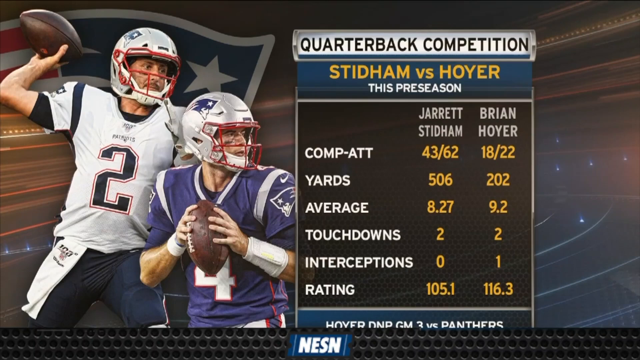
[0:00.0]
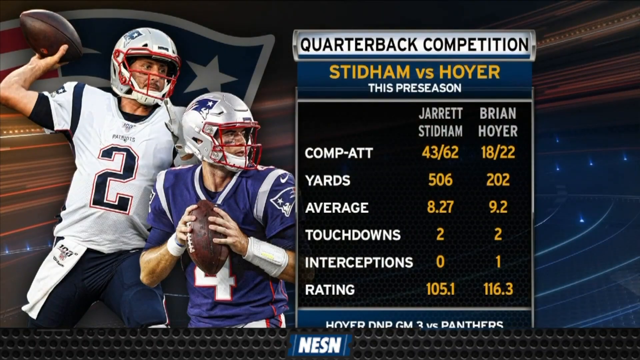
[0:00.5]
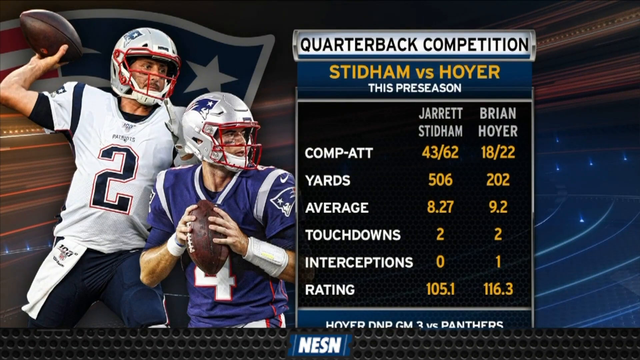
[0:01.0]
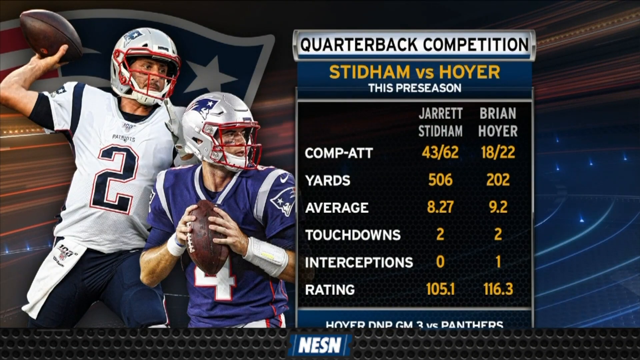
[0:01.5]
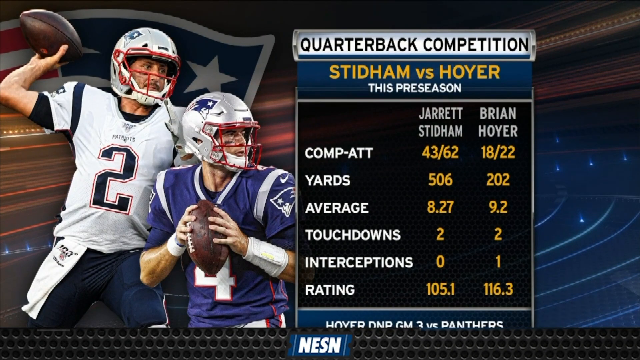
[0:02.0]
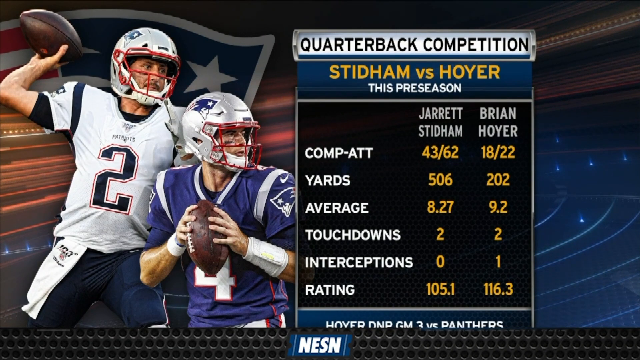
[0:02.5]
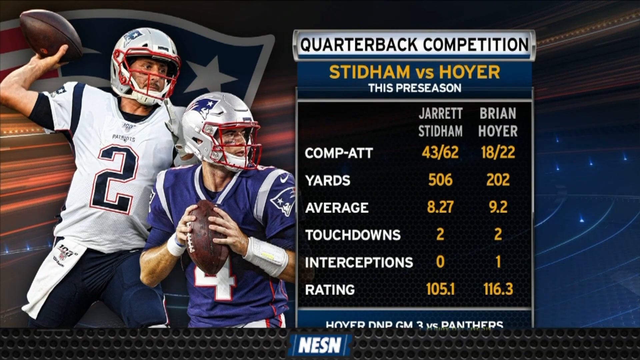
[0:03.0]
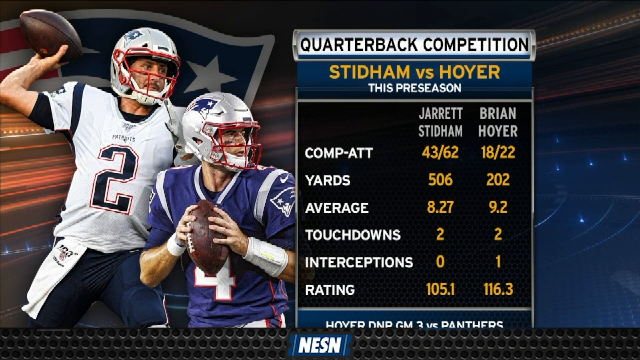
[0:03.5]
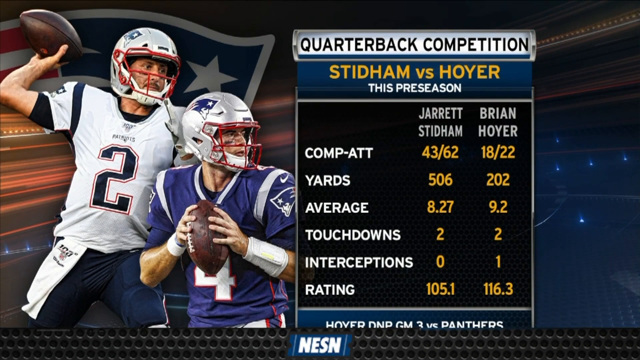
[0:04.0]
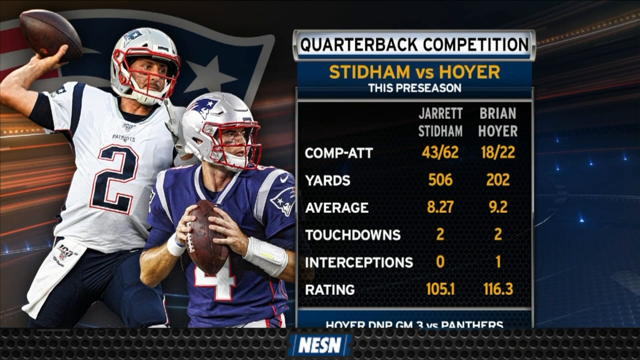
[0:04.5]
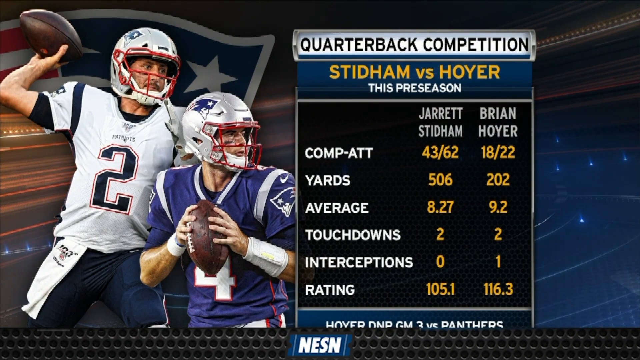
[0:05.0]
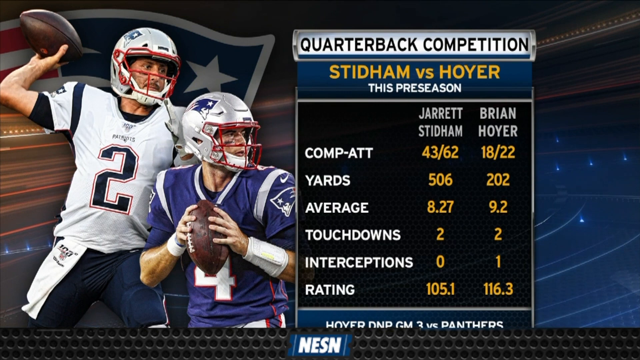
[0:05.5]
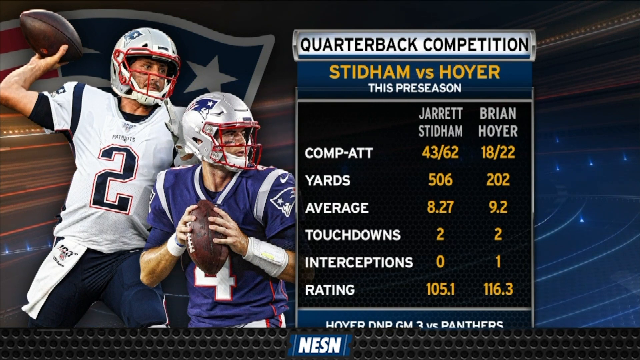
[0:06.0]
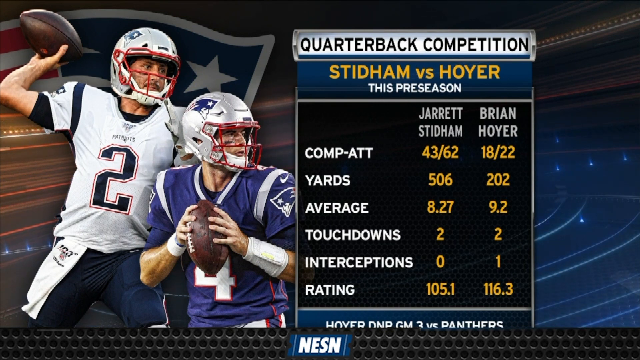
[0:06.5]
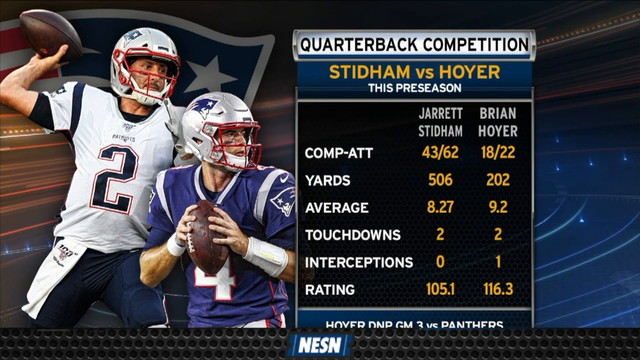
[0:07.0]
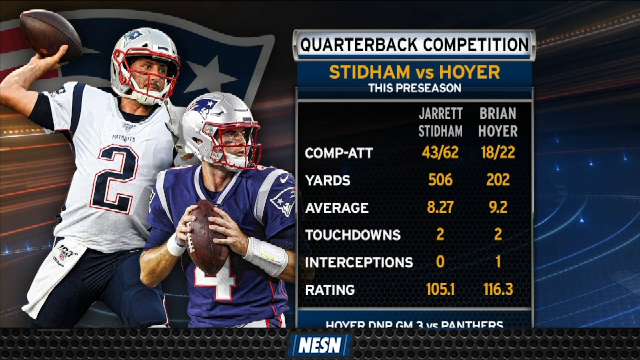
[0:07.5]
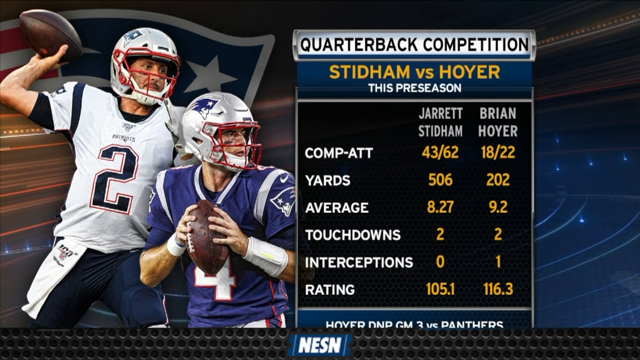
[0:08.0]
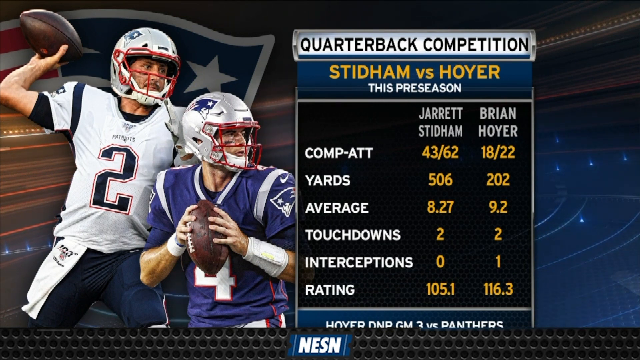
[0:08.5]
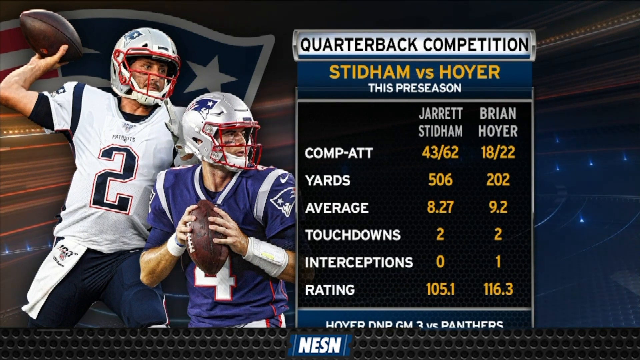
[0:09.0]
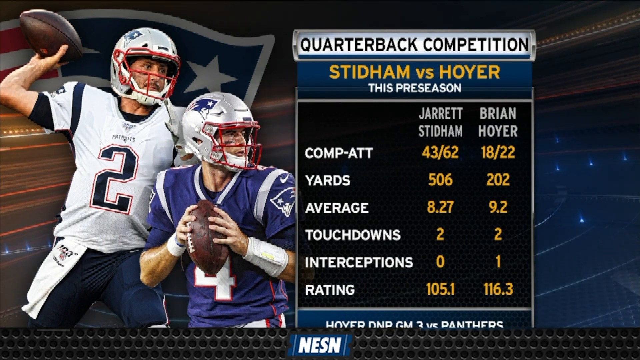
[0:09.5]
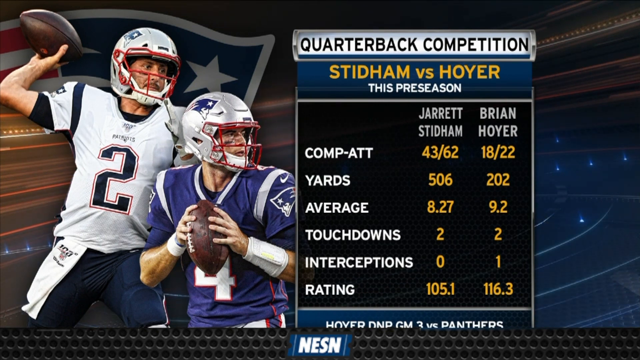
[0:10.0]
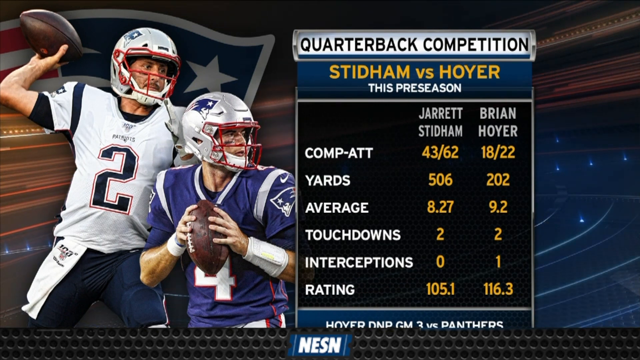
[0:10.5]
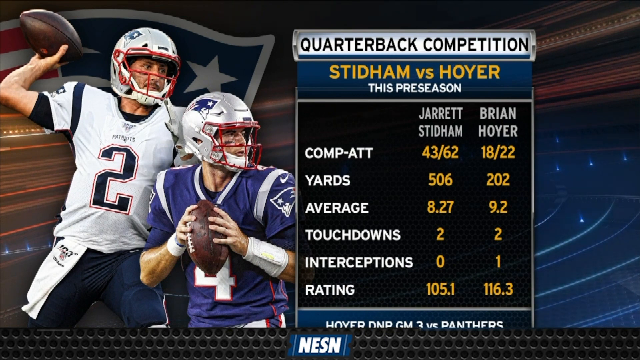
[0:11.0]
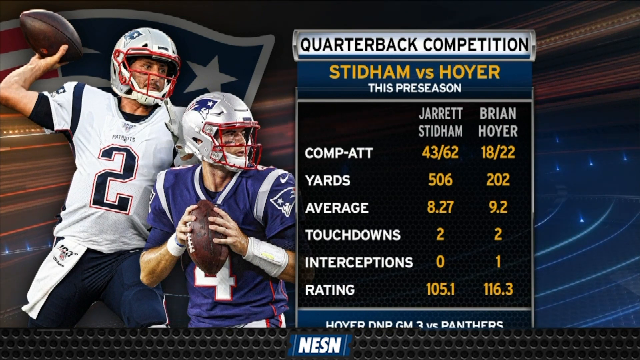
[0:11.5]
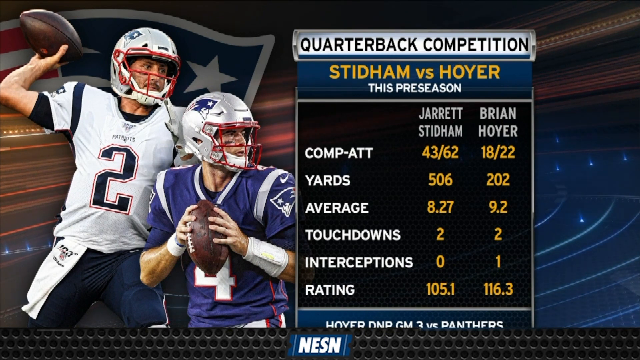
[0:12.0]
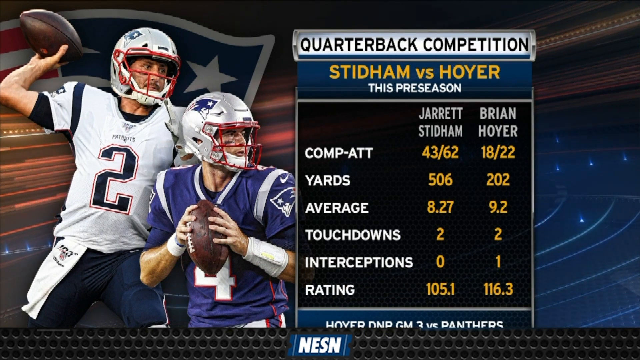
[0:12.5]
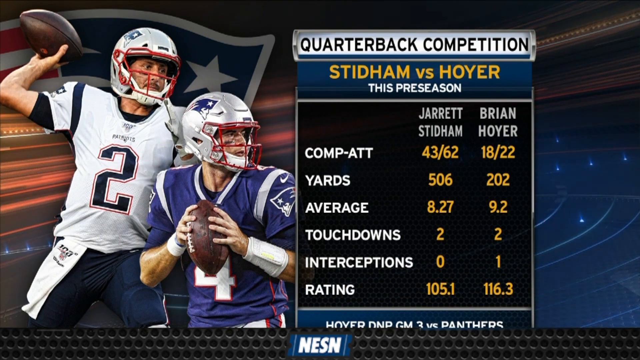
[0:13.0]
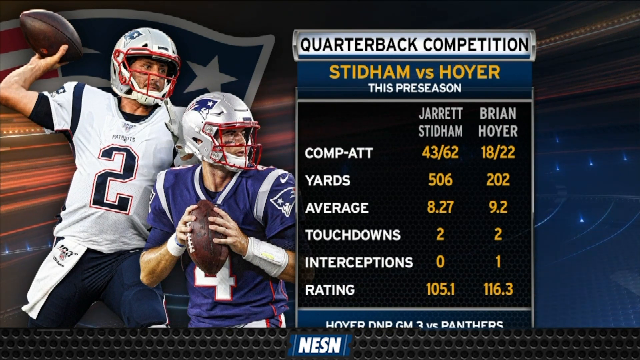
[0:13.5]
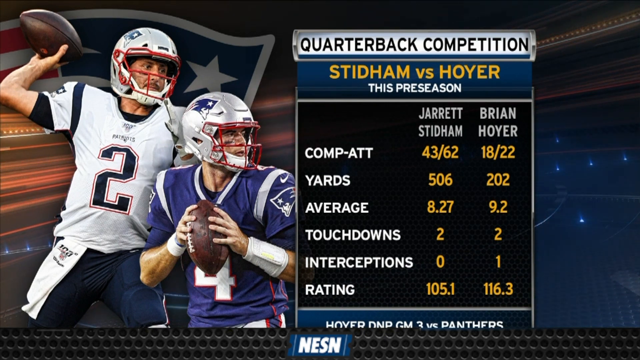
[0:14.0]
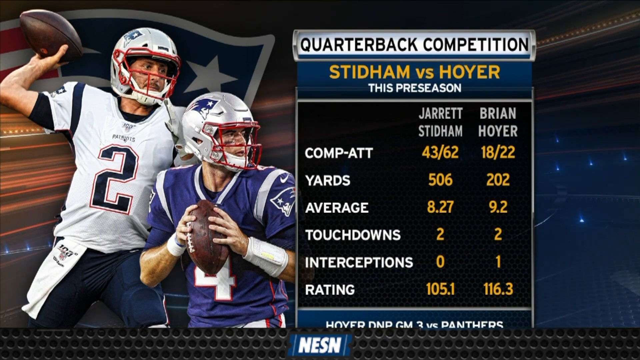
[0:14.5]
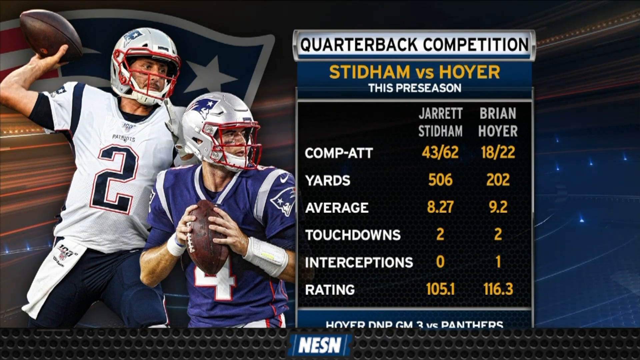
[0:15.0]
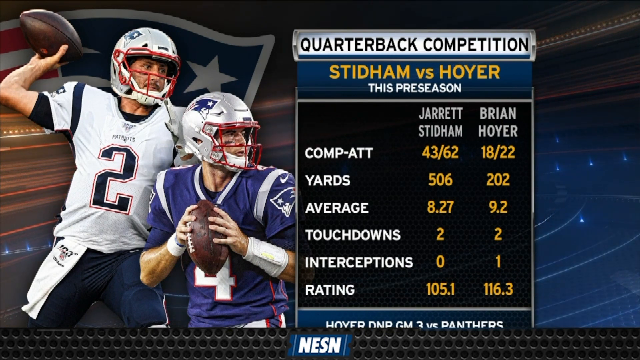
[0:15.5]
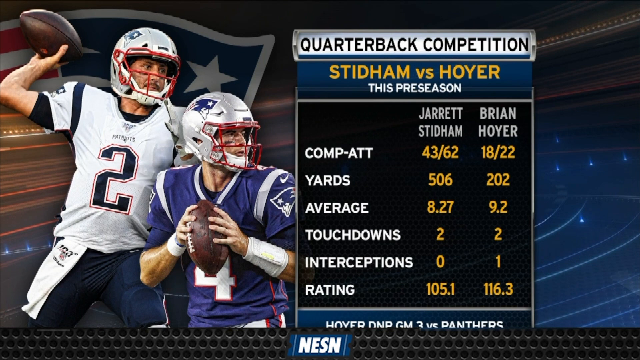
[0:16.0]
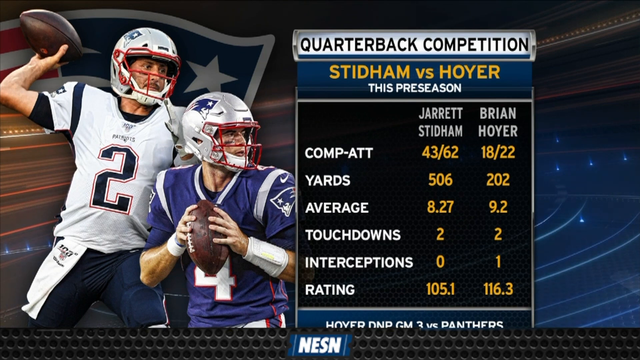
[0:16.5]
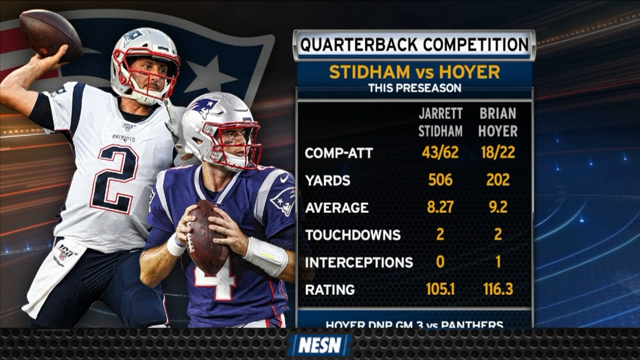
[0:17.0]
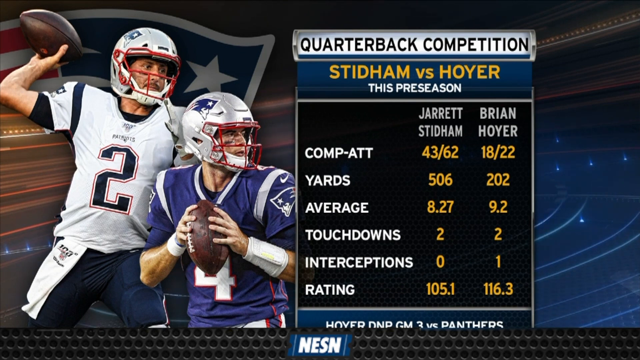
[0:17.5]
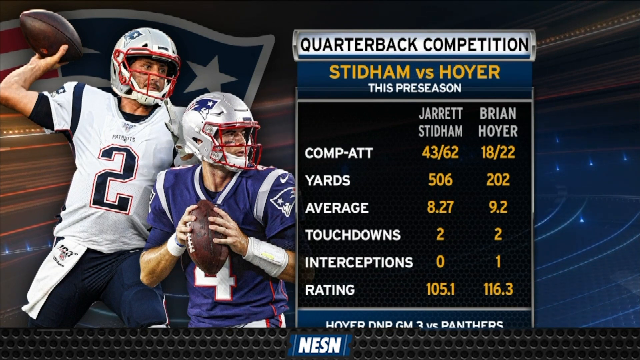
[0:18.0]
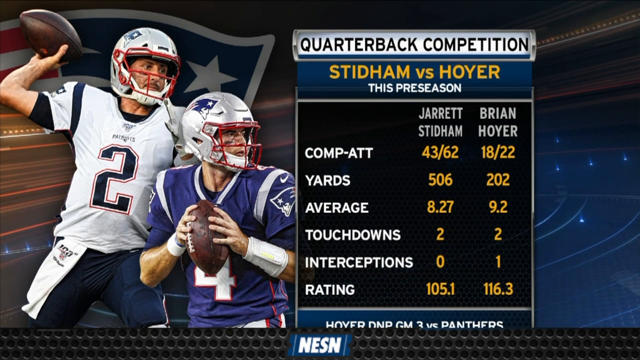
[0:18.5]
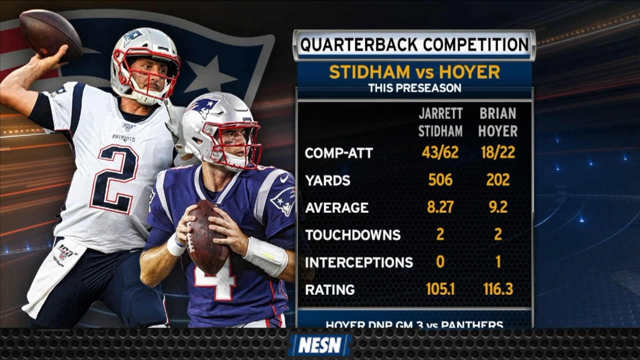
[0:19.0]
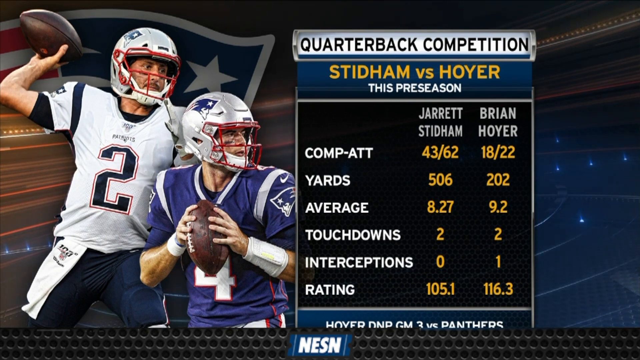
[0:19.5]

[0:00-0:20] The main subjects are two guys who look like rugby players, holding a rugby ball in their hands. They appear to be roughly 35 to 44 years old. One wears a blue jersey with some silver or white on it, and the other wears a white jersey with black or maybe navy blue on it. They are of normal human size. They look like they are posing, as if playing rugby. Only two people are visible. Little changes except the background colors, and there are some moving lines in the back of the video. The setting stays the same.